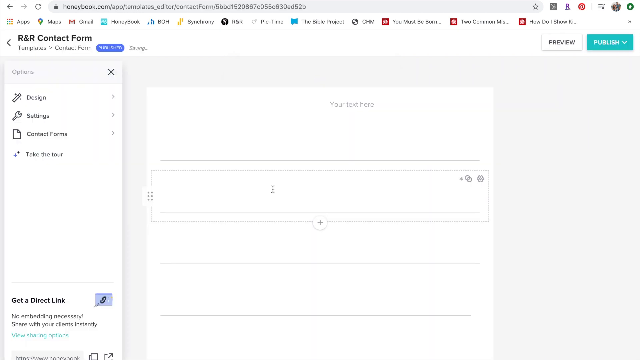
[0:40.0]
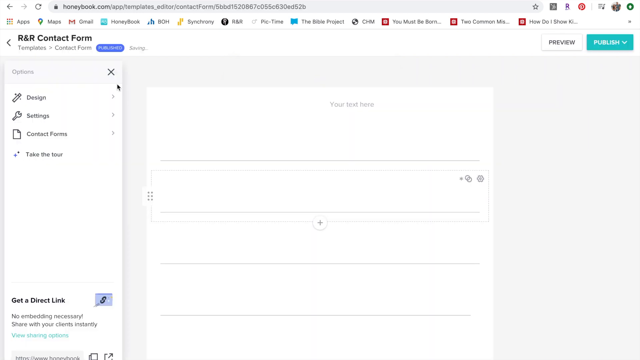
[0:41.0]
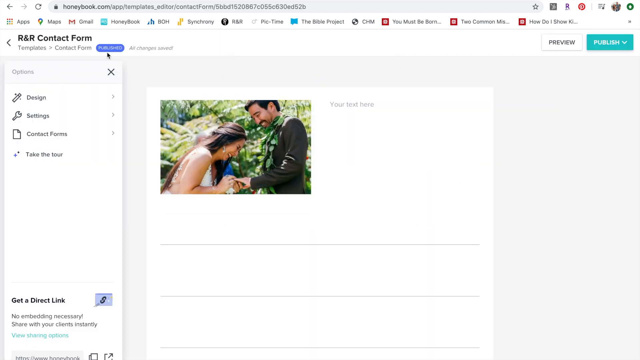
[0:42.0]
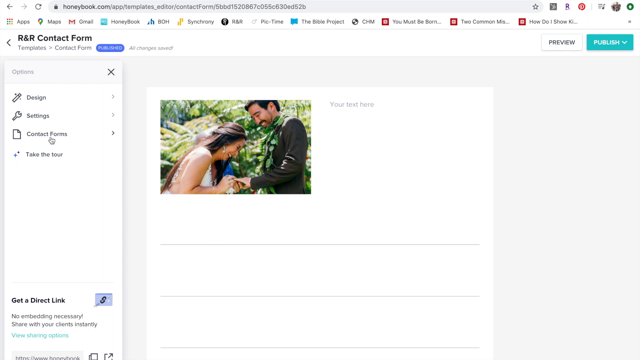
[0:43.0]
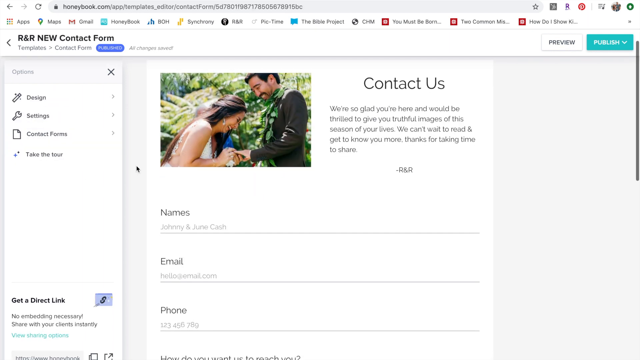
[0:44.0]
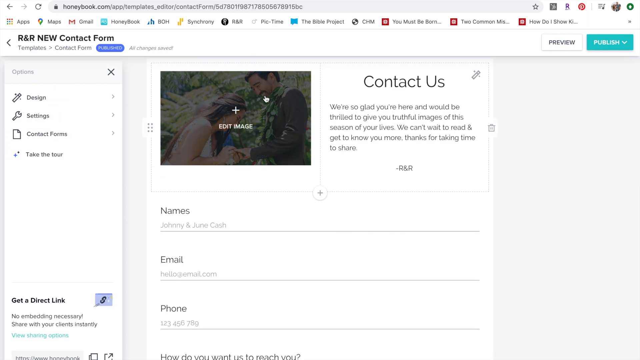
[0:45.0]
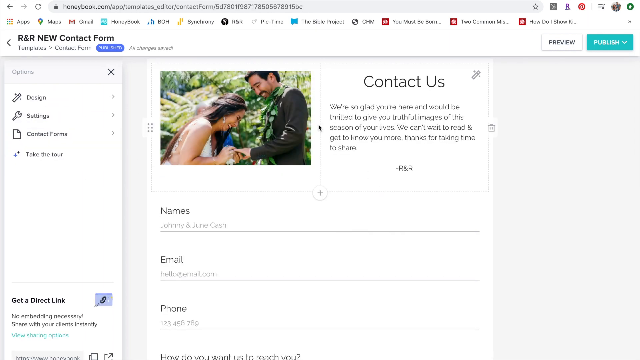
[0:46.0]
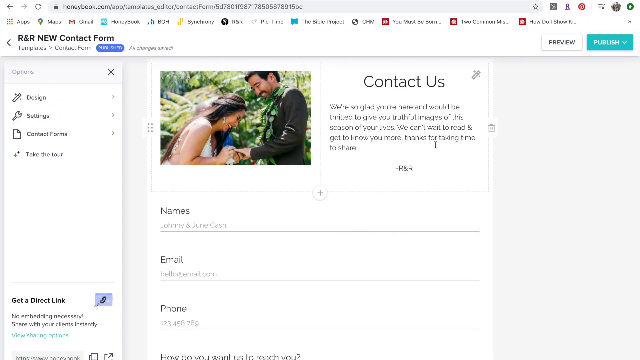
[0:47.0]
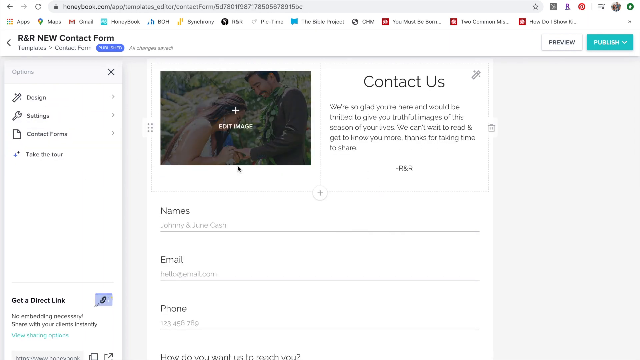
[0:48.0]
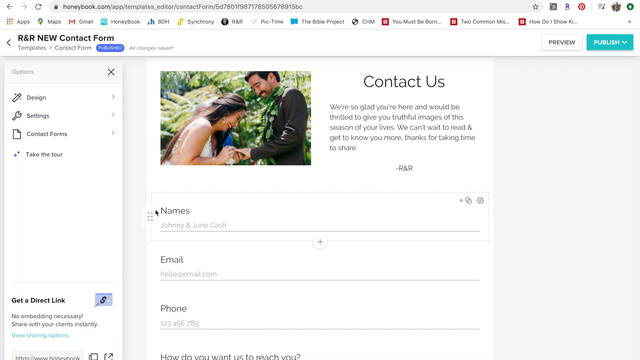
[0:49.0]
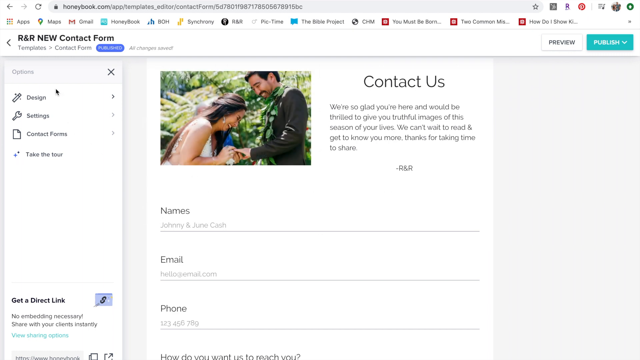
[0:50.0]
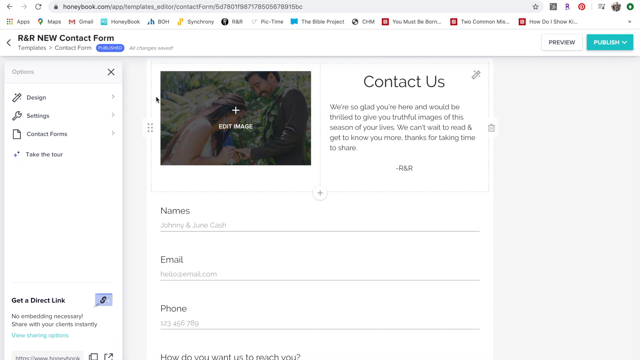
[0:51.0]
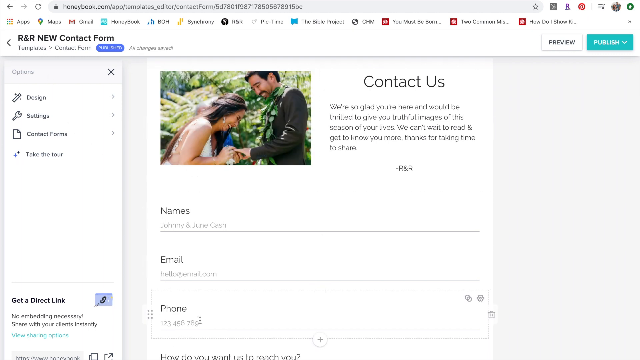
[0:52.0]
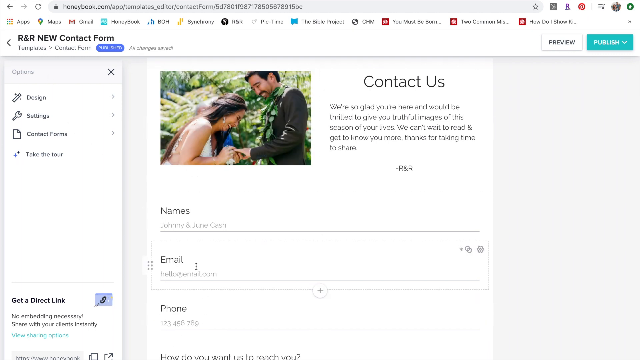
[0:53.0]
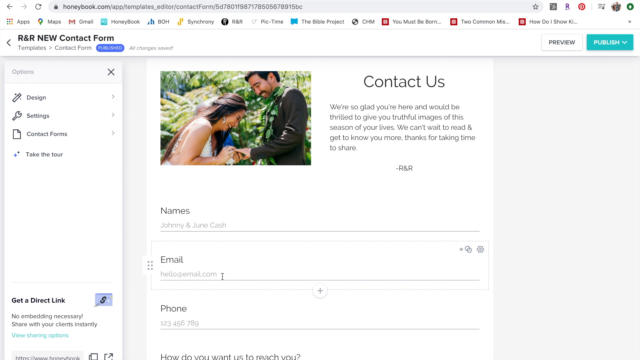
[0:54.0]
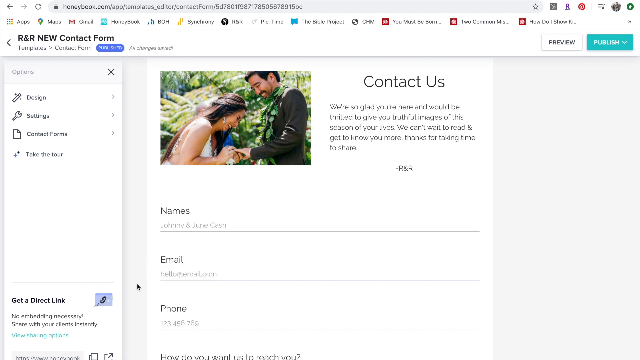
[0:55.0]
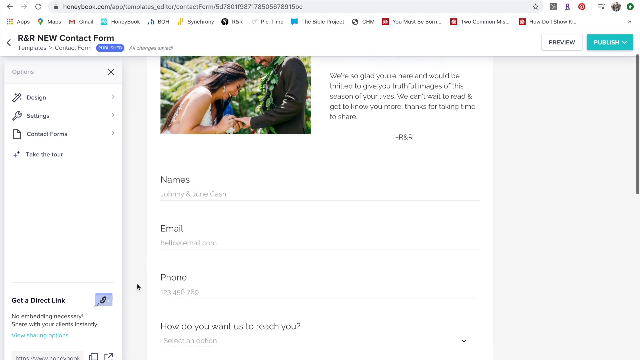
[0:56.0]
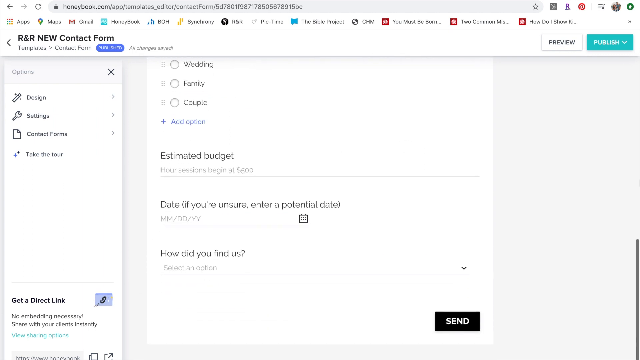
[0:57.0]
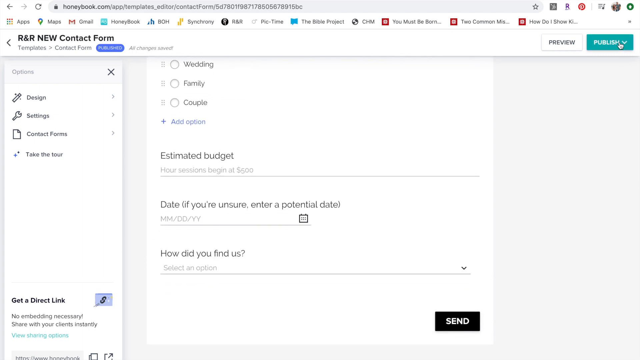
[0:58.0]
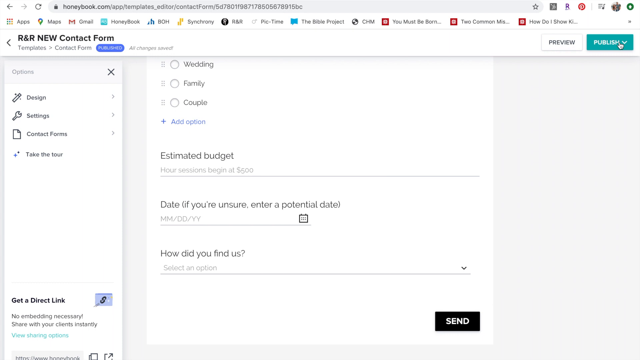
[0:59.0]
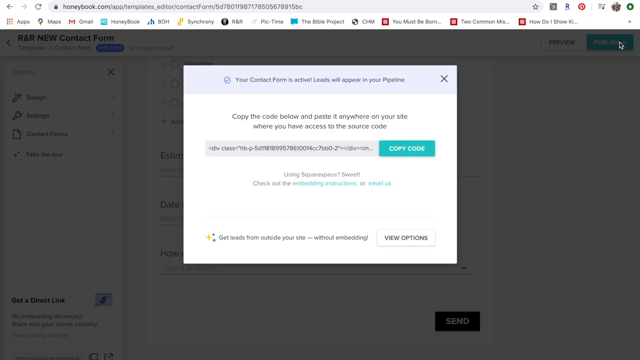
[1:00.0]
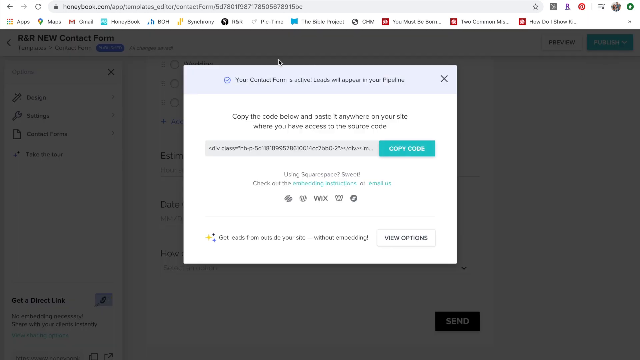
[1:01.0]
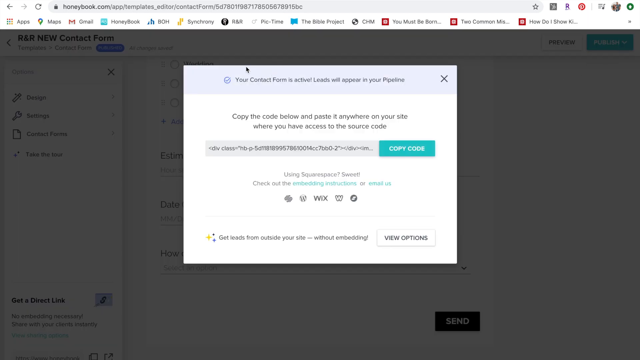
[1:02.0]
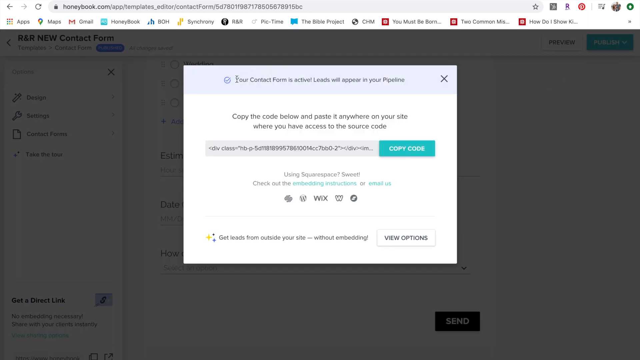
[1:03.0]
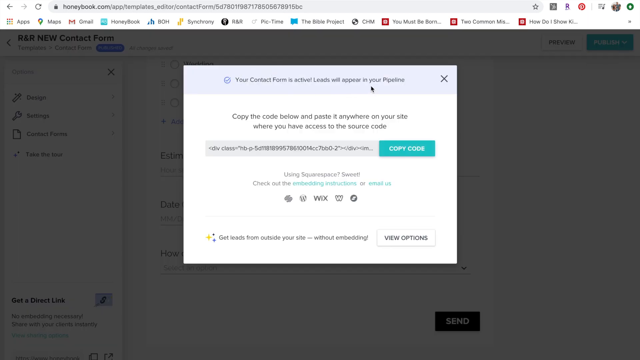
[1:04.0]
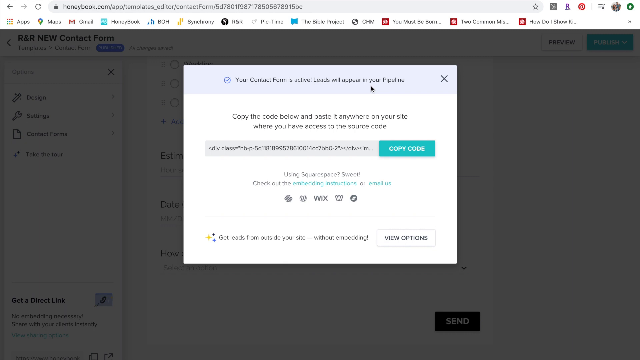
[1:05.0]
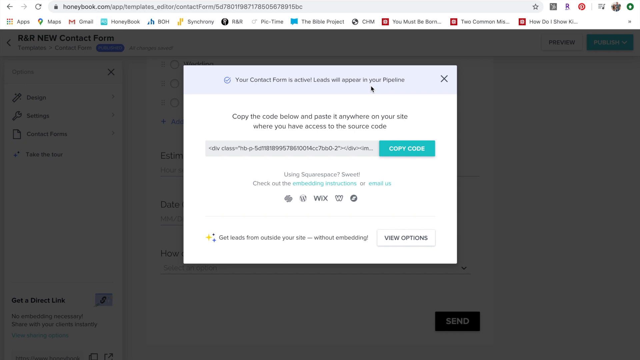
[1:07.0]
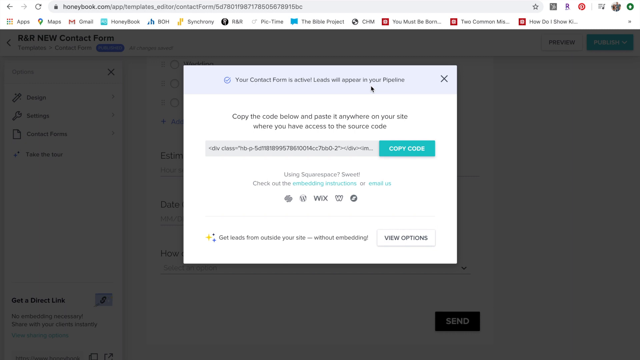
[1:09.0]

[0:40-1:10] A computer screen shows a maximised internet browser on honeybook.com, on a page called R&R contact form. There are options on the left-hand side for navigating through the page. The user moves the cursor to the left and selects contact forms from the left-hand menu, which brings up a template contact form in the wider window on the right. In the left-hand corner of the form is a photograph of a man and a woman who look like they are in a marriage proposal. Hovering the cursor over the image brings up an overlay with an option to edit image. The cursor moves down to the first header option, names, then to the second, email. The user highlights the placeholder email already on the form and then unhighlights it. They scroll down to the bottom of the form, then move the cursor to the top right-hand corner and select a button called publish, which brings up a pop-up overlay confirming that the contact form is active.